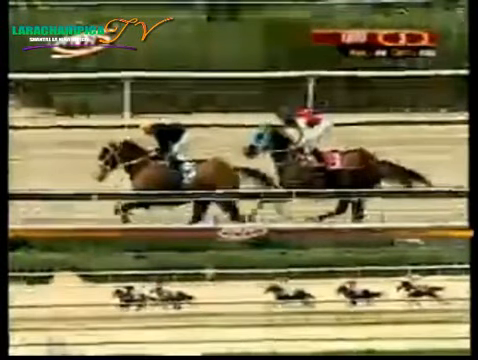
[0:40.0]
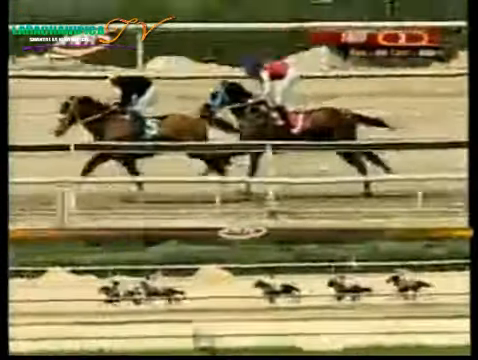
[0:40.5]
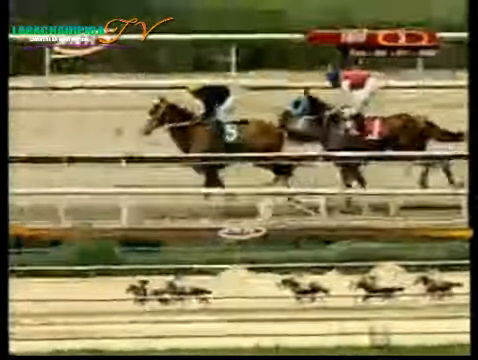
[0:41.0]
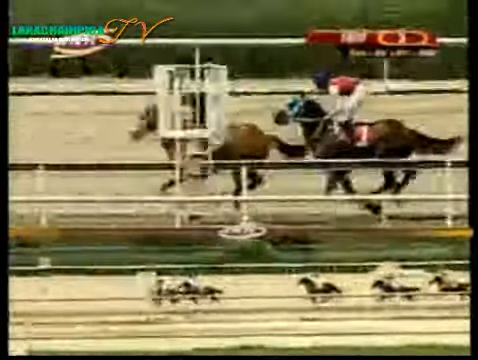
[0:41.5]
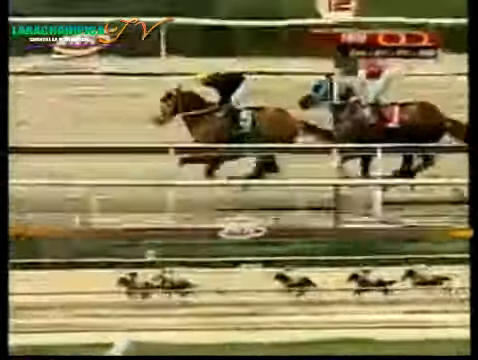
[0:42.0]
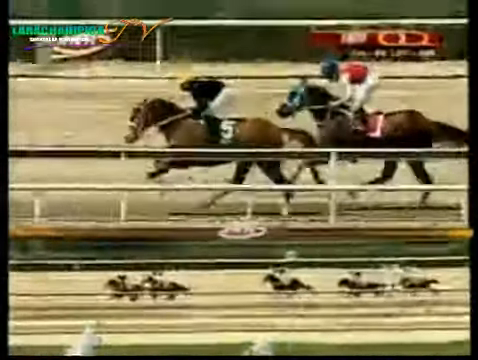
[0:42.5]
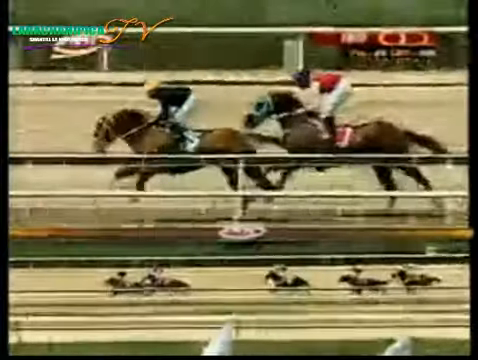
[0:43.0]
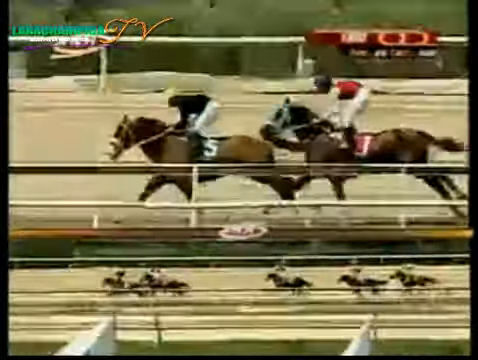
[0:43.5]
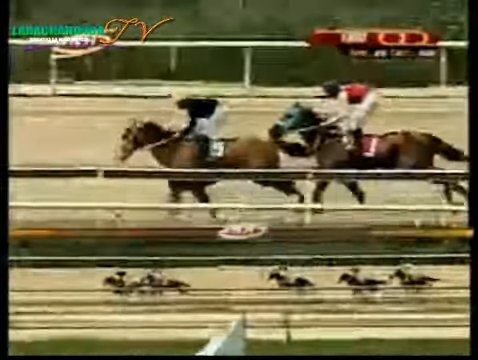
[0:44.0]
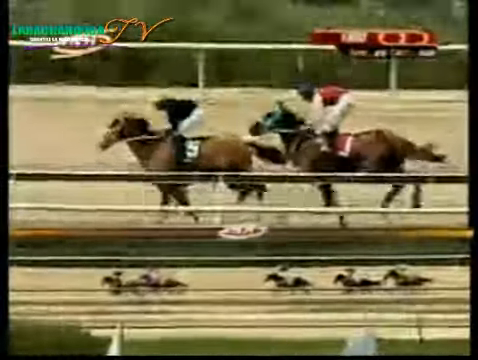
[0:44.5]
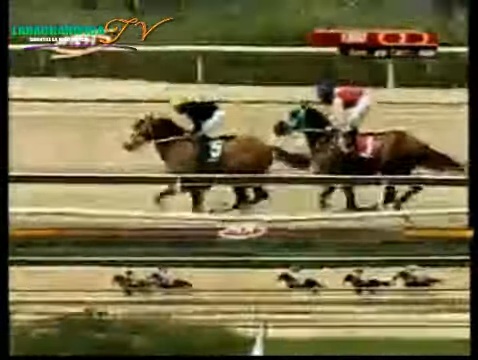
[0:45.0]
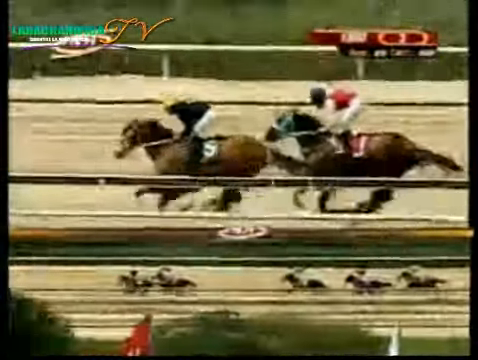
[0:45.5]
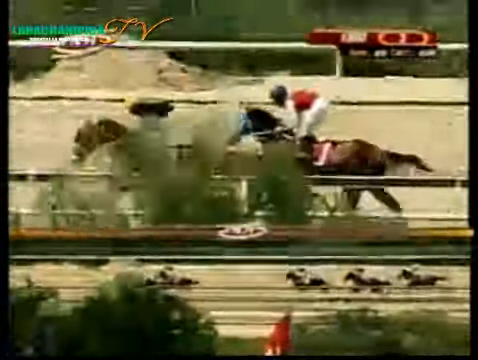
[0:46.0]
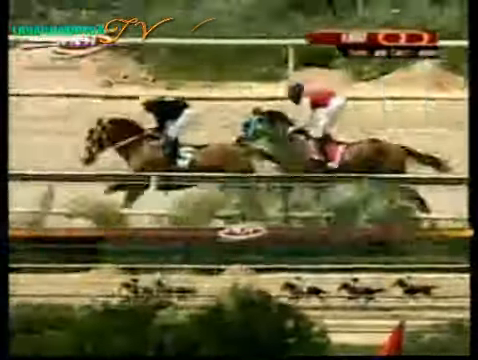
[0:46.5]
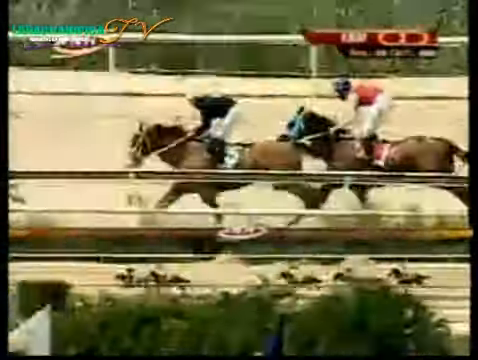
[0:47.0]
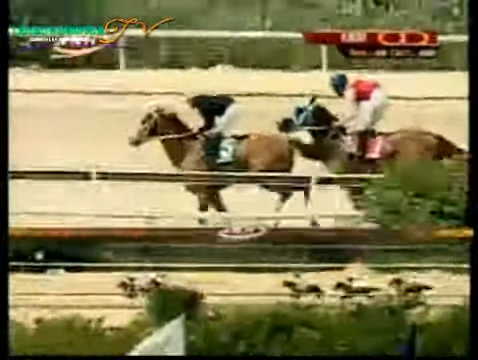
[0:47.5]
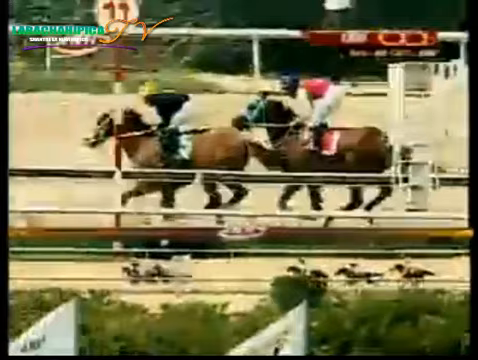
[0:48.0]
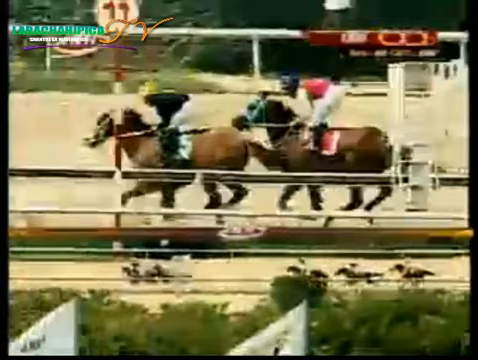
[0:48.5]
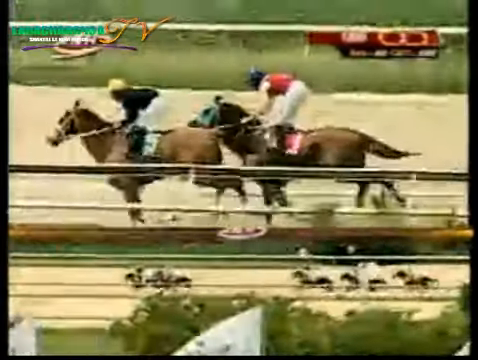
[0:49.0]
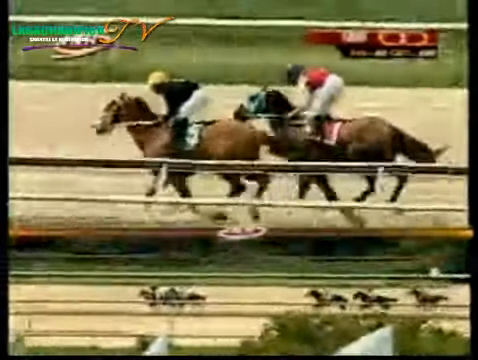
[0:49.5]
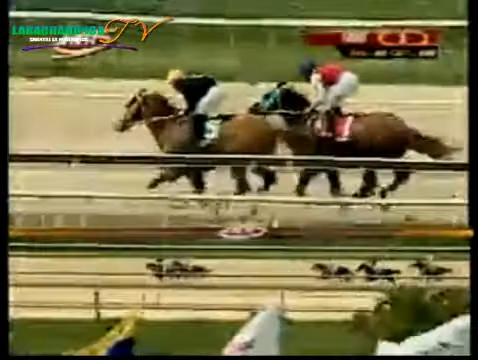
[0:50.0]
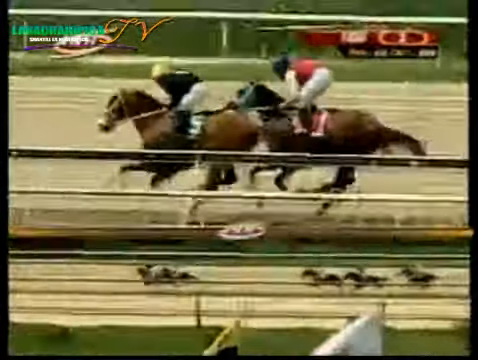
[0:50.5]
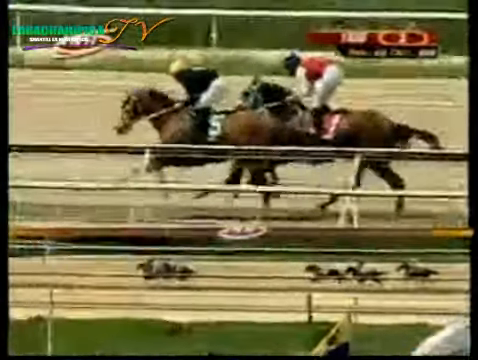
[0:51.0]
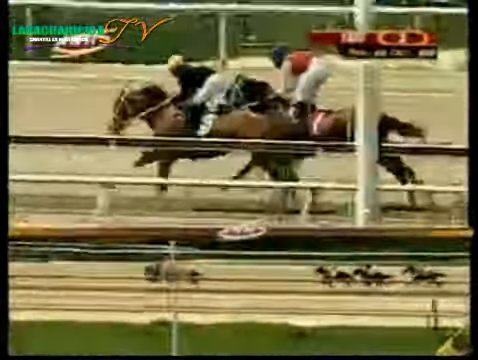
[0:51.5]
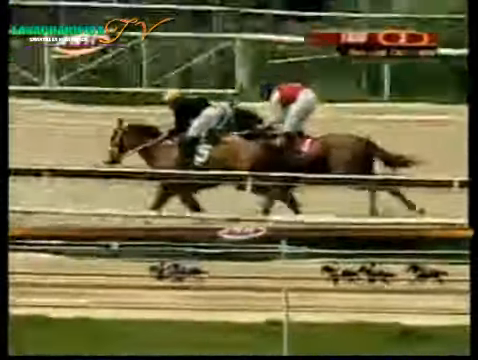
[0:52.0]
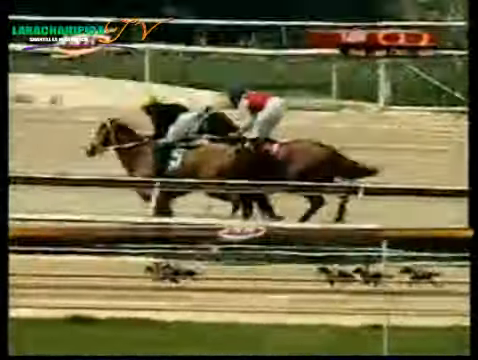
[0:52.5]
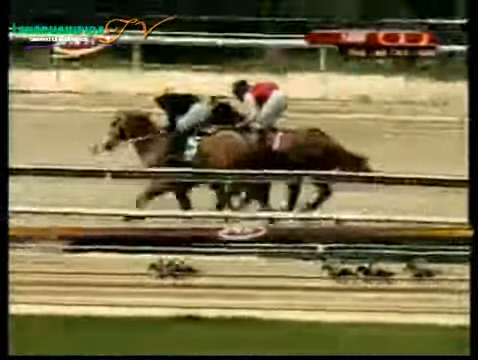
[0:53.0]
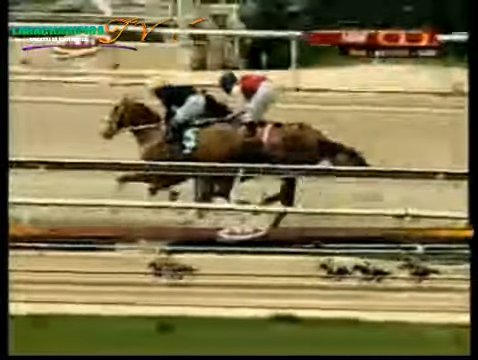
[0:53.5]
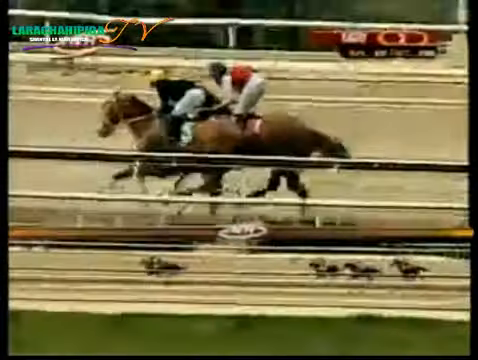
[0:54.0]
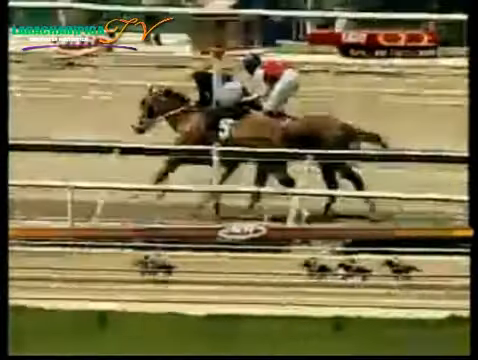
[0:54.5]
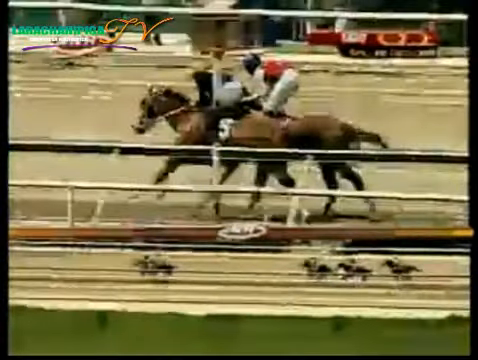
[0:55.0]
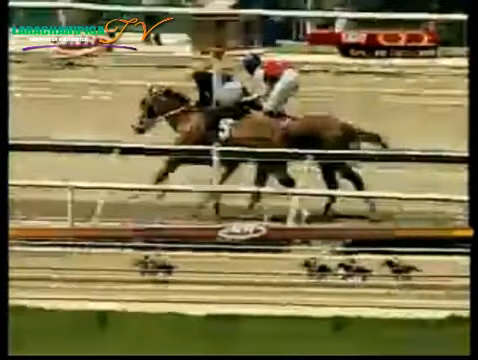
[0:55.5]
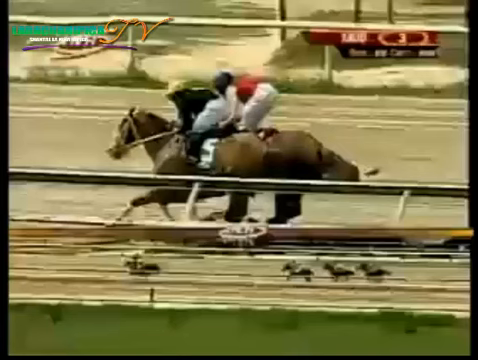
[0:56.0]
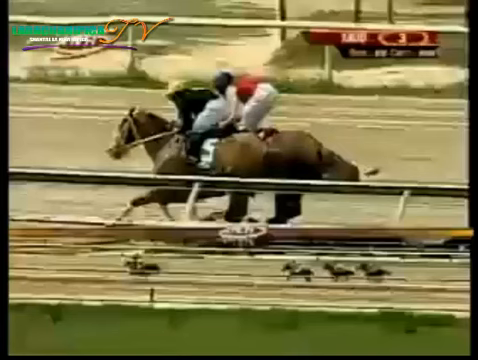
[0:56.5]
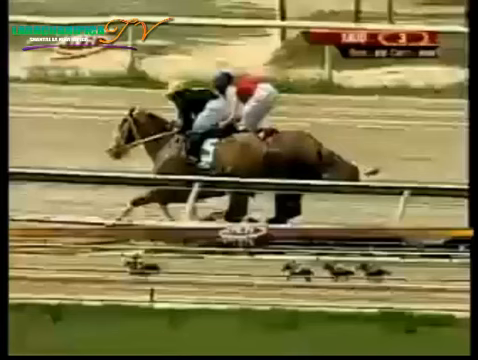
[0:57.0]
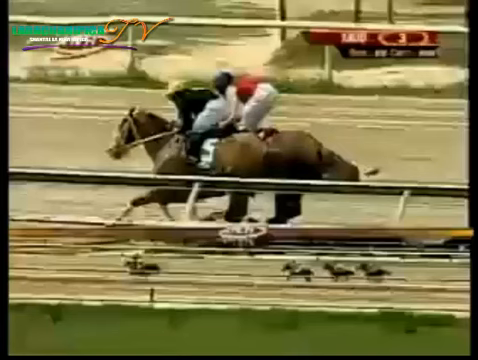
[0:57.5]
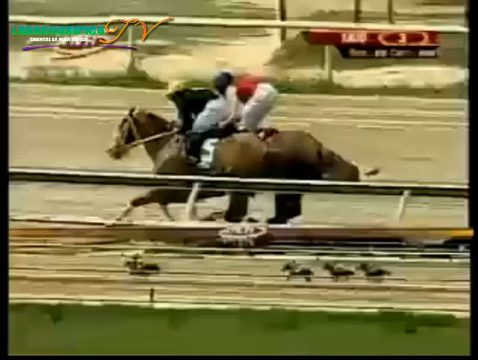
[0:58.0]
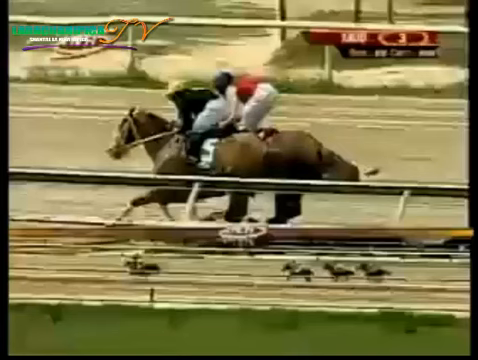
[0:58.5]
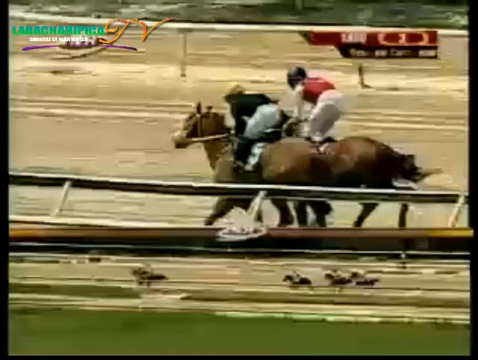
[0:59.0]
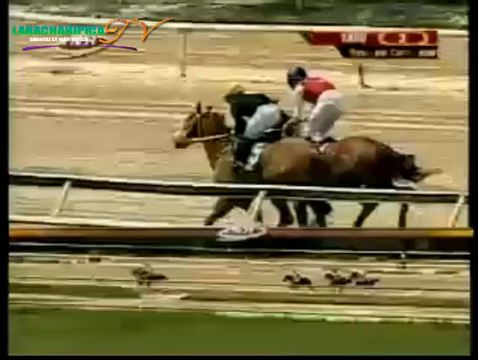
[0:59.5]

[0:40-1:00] Number 5 is still in the lead, but a horse right behind it is creeping up. Number 5 appears to have a dark green tag, with the number 5 in white on the horse. The horse behind it is a darker shade of brown, its front end right on the back end of number 5. Apparently toward the end, the other horse gains speed until the two are pretty much side by side, with no clear horse in first place. This is also visible in the view at the bottom of the screen, where the other three horses are pretty far behind.